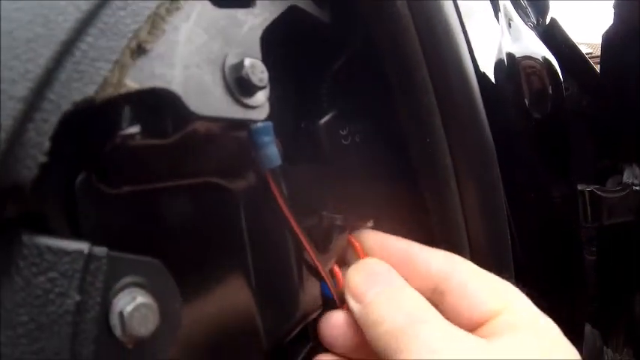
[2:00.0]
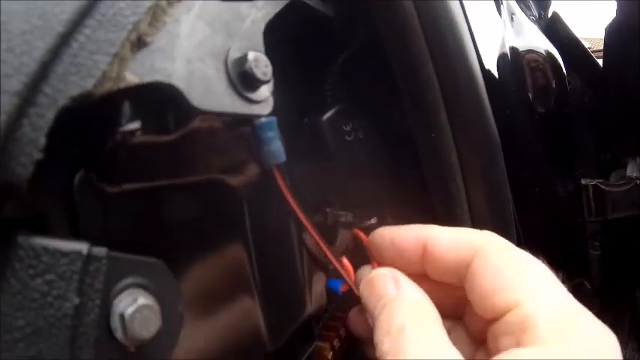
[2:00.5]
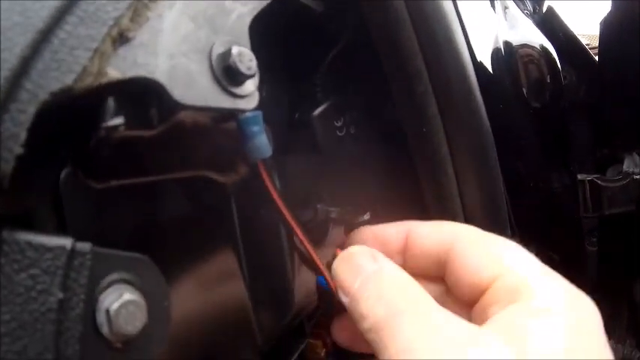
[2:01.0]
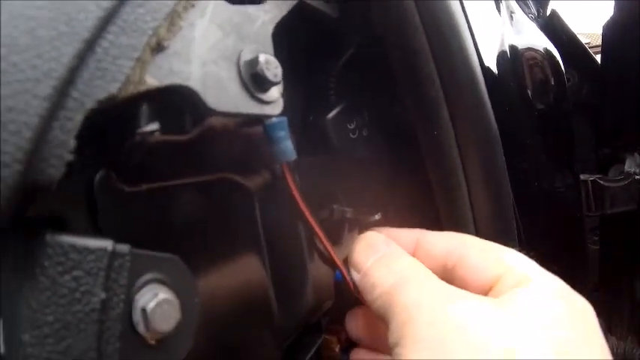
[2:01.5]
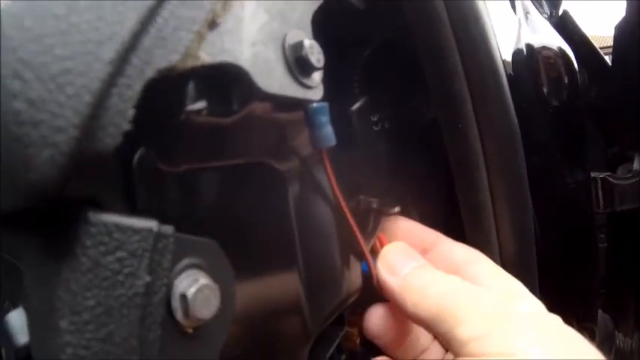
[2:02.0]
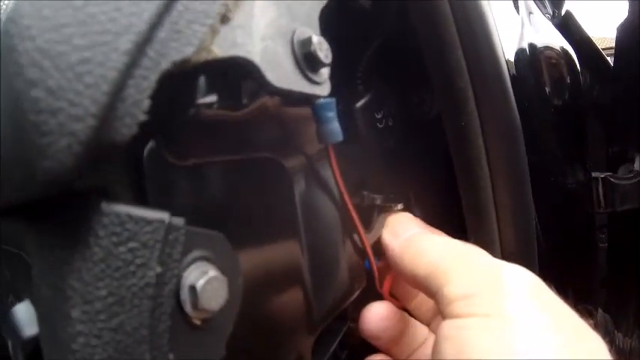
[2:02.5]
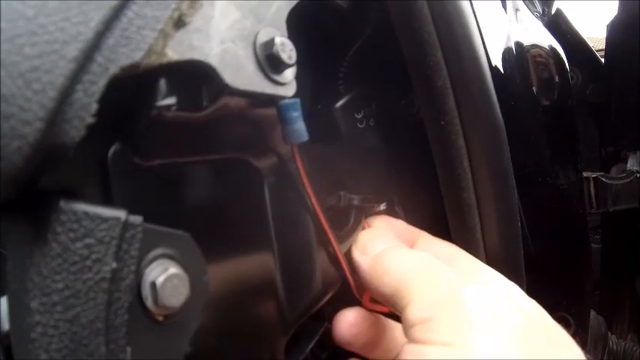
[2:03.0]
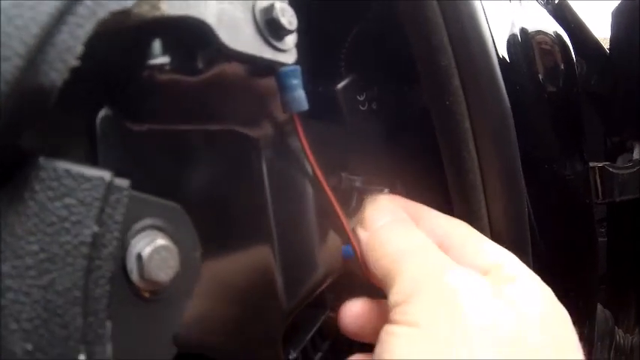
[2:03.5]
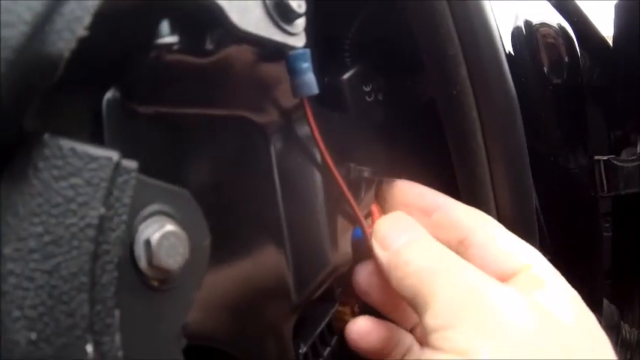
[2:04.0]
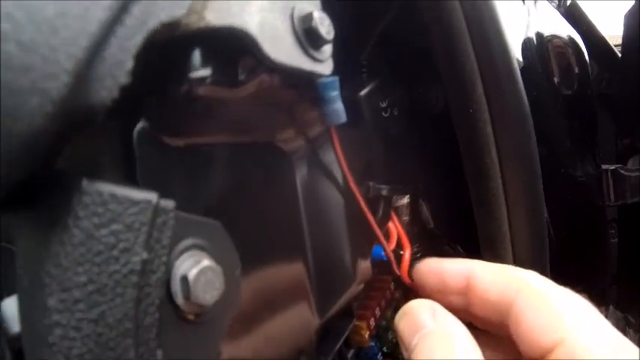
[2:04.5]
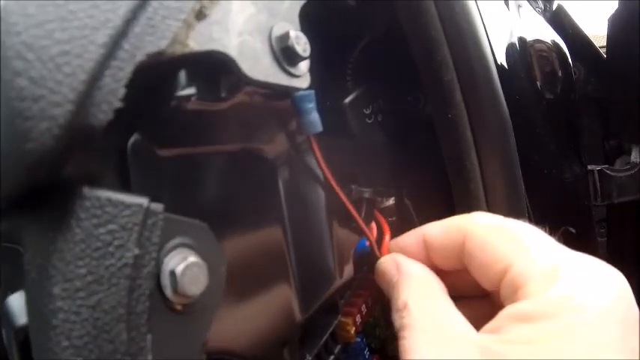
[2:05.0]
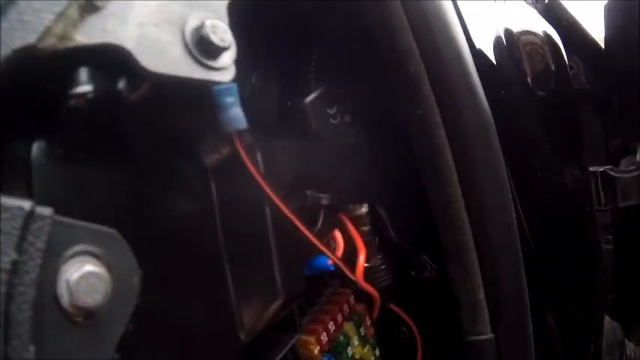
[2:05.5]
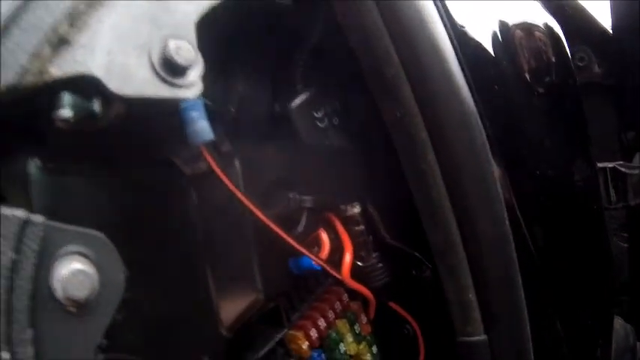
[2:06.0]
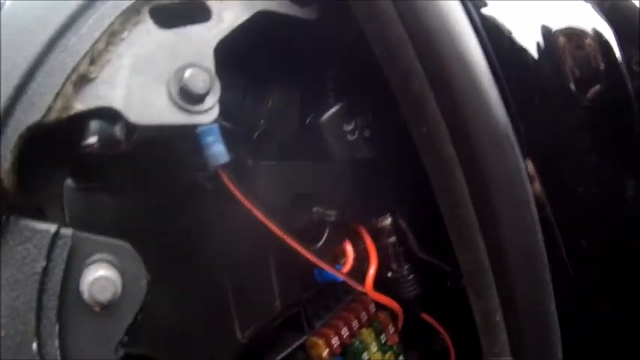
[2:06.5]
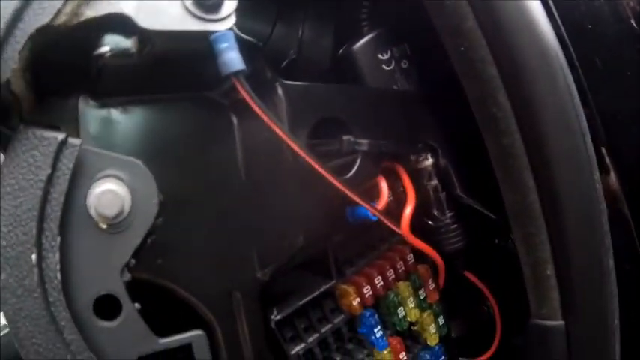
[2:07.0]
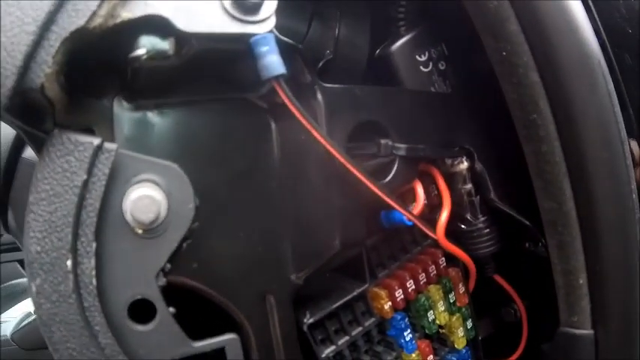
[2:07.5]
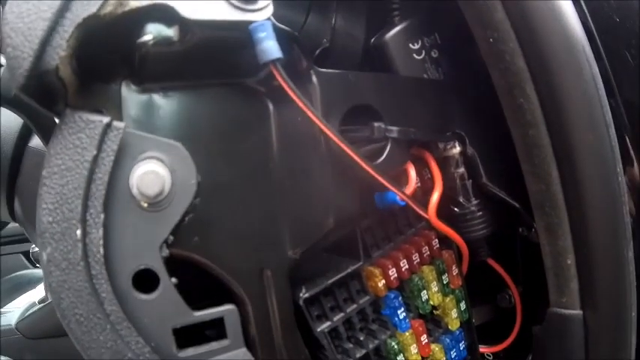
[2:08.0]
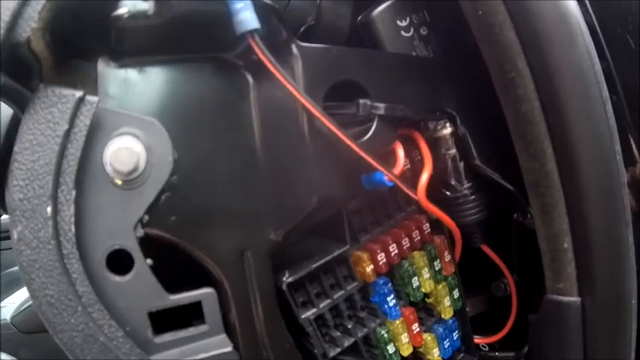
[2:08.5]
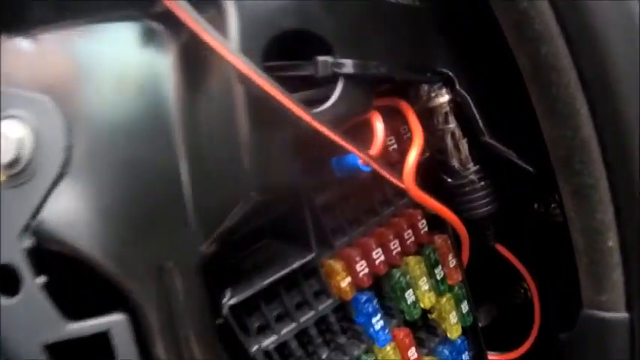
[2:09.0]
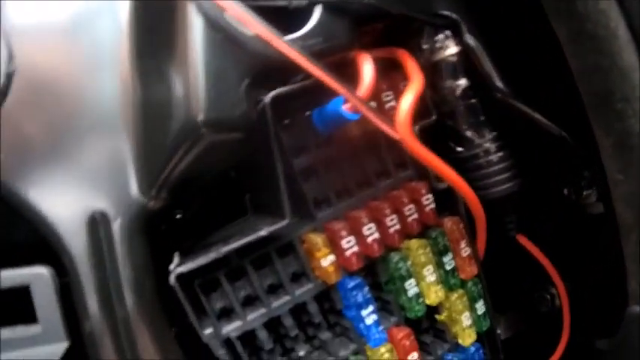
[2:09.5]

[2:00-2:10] Someone is handling a wire in his car. It appears to go to the fuse box, which seems to be built into the panel behind the steering wheel. A red wire comes out of the fuse box; the top of the wire has a blue thing on it, and it seems to go into the panel or base behind the steering wheel. The person, who is Caucasian, holds the other end of the wire with his right hand, which has very short fingernails. He wiggles the end of the wire, appears to plug it in, then touches the wires lightly as if keeping them in place. The camera pans down to the fuse box. He apparently plugged the wire into the top row, and to the right of it are a couple of red number 10 fuses. The next row is empty. The next row of fuses is much wider than the first two, and its first four slots are empty, followed by an orange number 5 fuse and five red number 10 fuses. In the following row the first four spots are also empty, followed by a blue number 15 fuse, an empty spot, a green 30, a yellow one whose number cannot be seen, another green one, and a red one. In the row beneath that, it is hard to see at first whether any are missing, but there is a green one, then a yellow one directly under the blue one above, a red 10, two empty spots, a yellow one, and a green one.